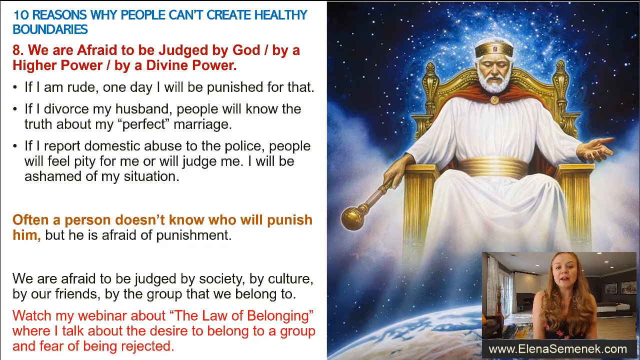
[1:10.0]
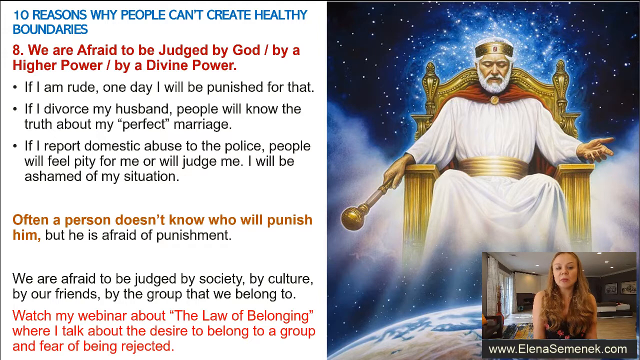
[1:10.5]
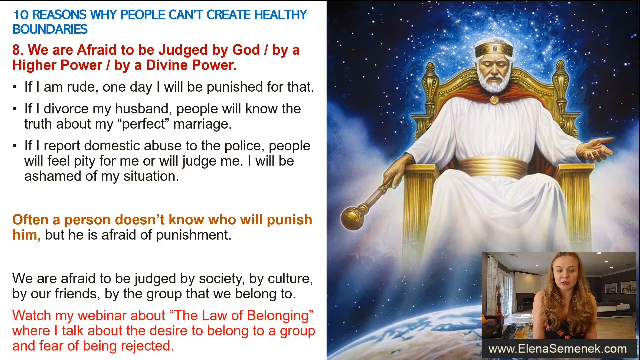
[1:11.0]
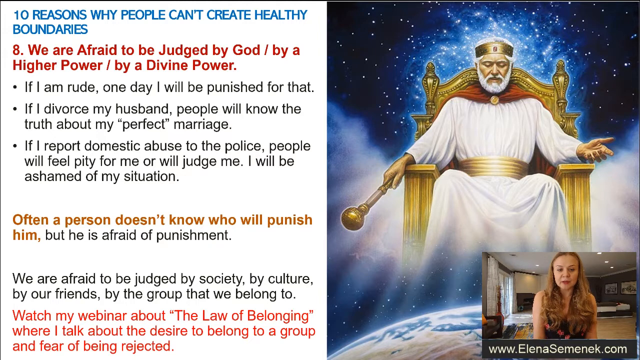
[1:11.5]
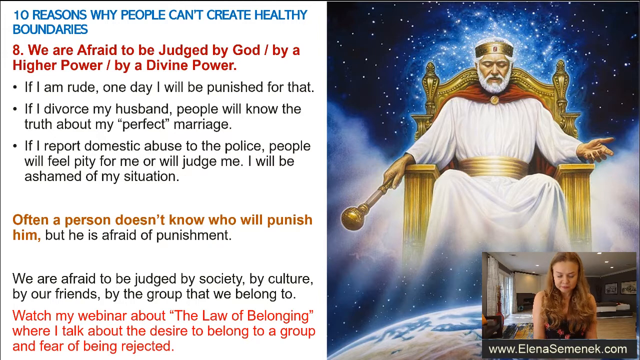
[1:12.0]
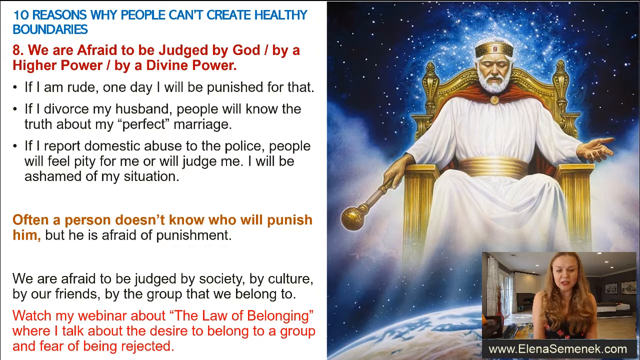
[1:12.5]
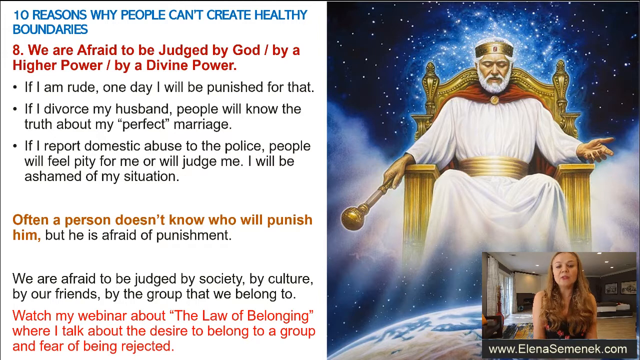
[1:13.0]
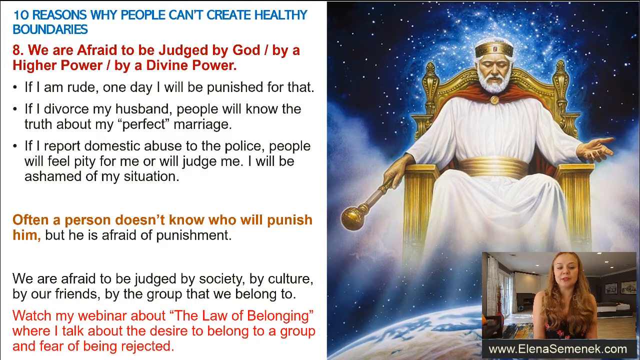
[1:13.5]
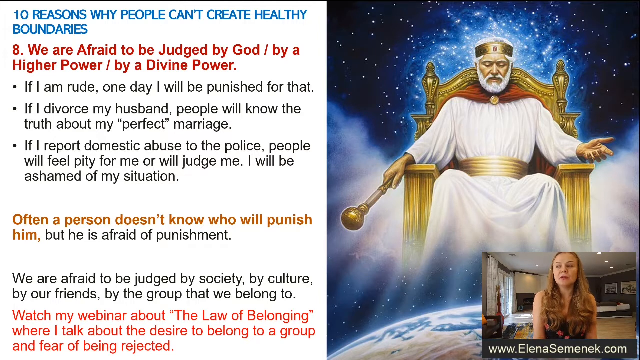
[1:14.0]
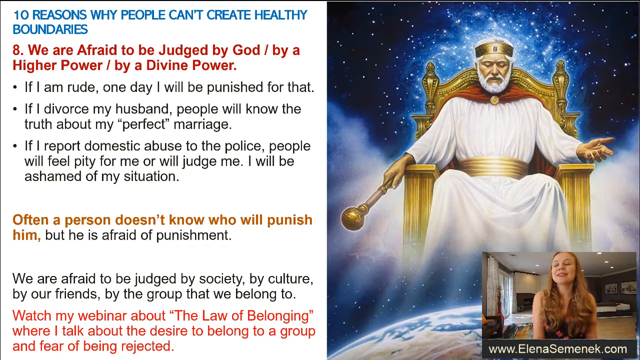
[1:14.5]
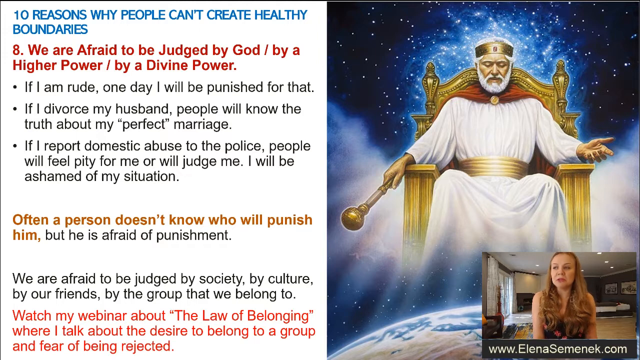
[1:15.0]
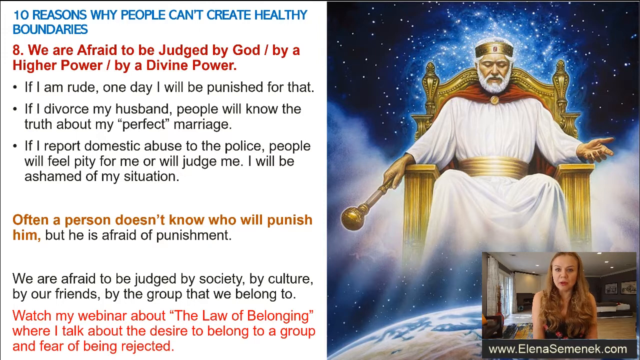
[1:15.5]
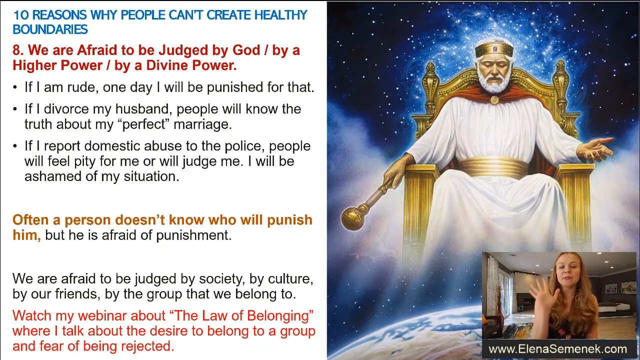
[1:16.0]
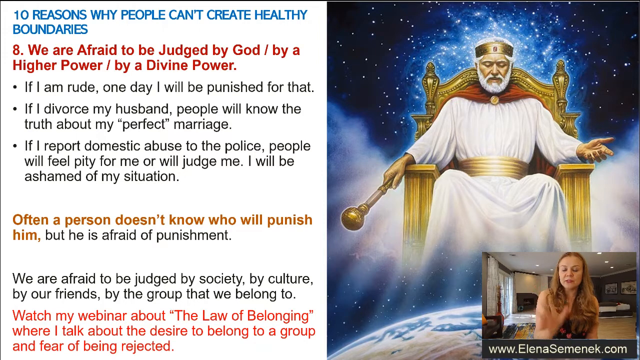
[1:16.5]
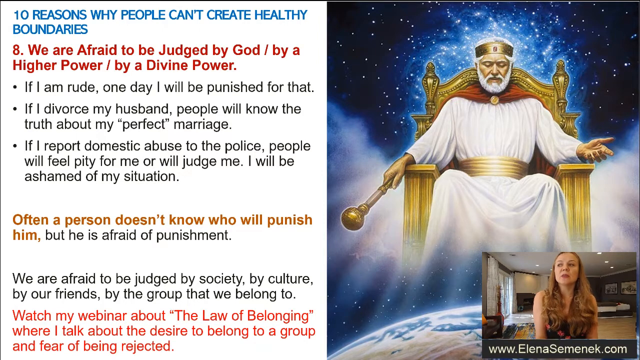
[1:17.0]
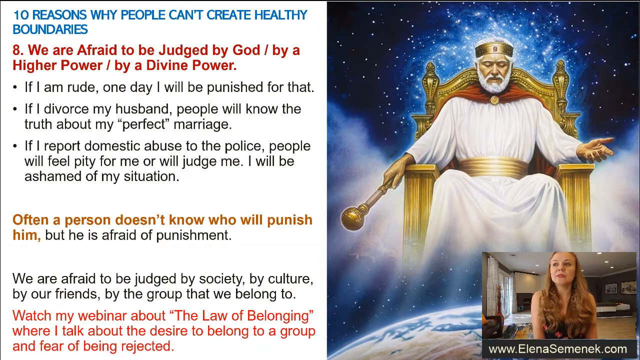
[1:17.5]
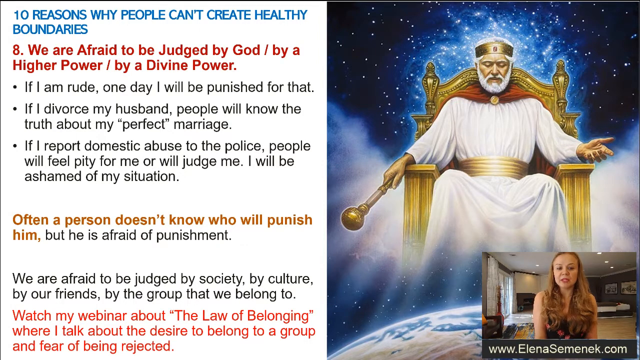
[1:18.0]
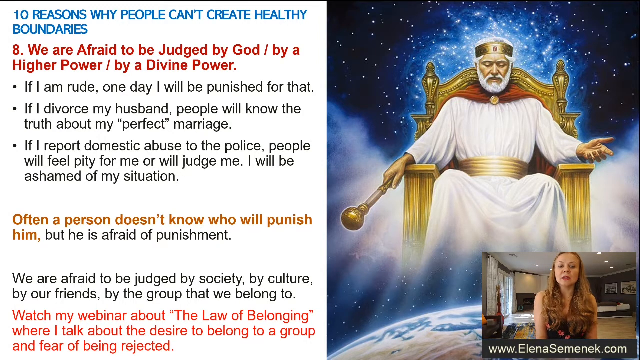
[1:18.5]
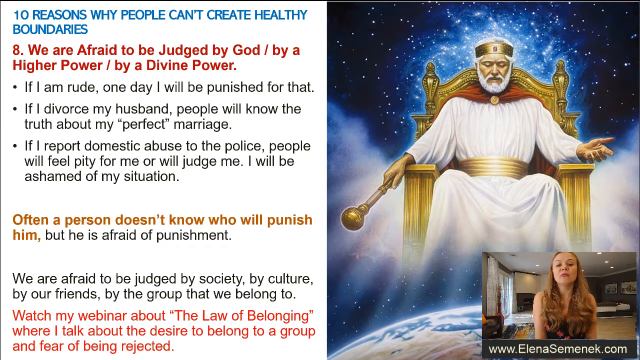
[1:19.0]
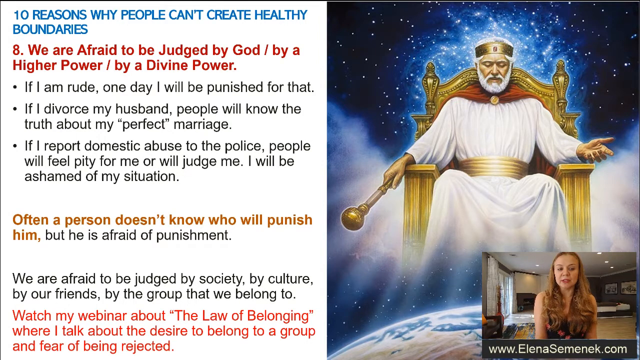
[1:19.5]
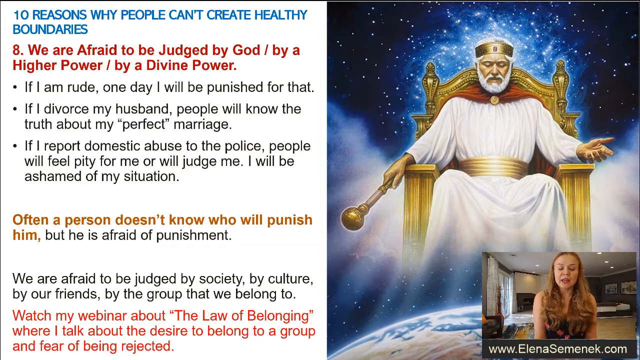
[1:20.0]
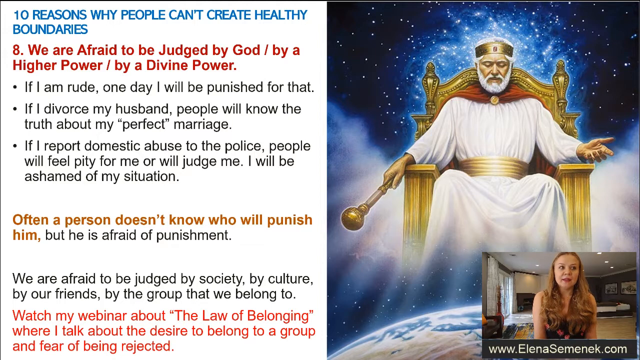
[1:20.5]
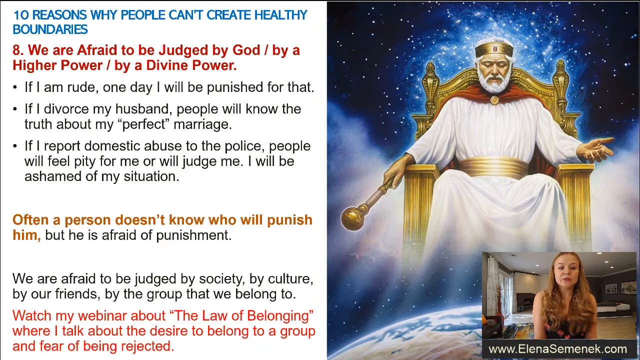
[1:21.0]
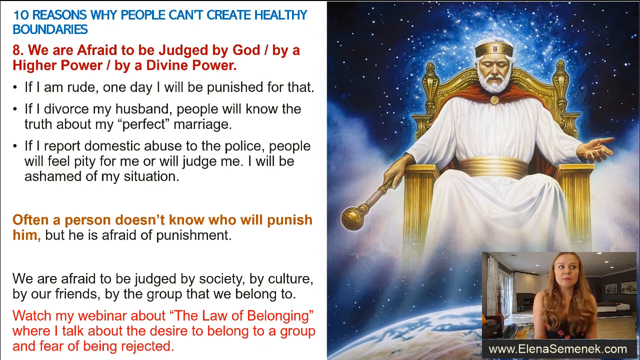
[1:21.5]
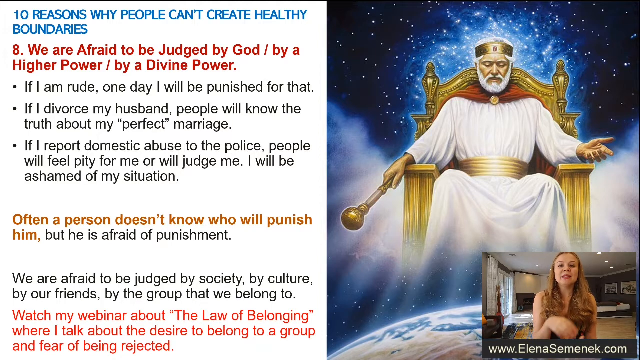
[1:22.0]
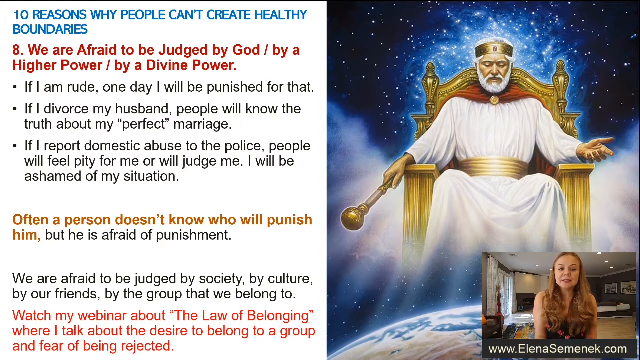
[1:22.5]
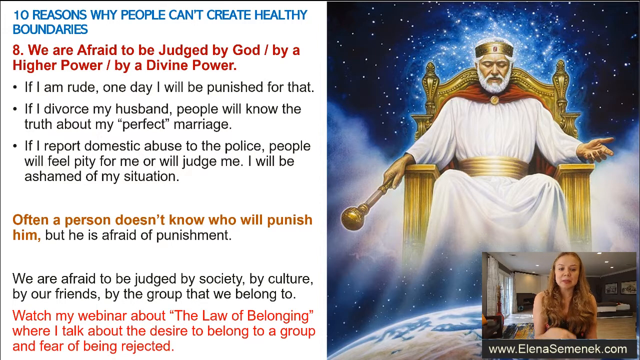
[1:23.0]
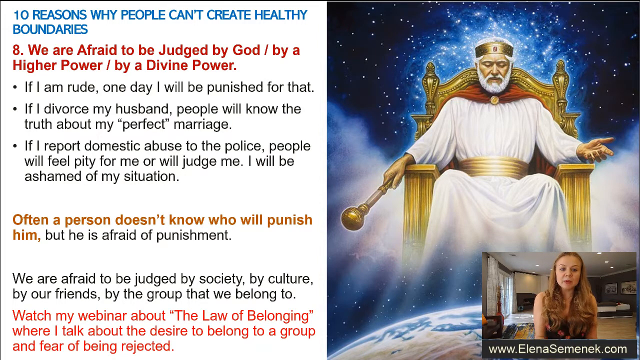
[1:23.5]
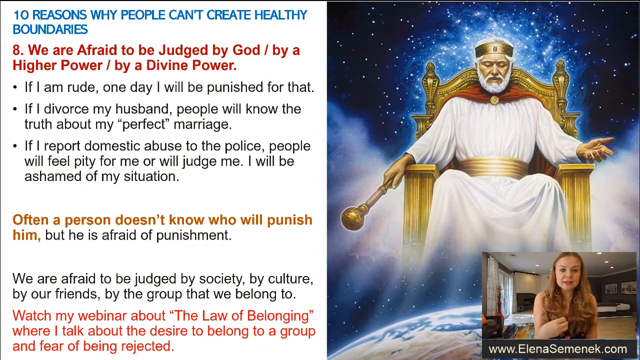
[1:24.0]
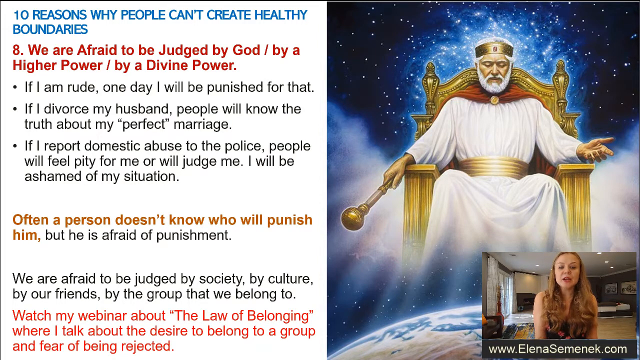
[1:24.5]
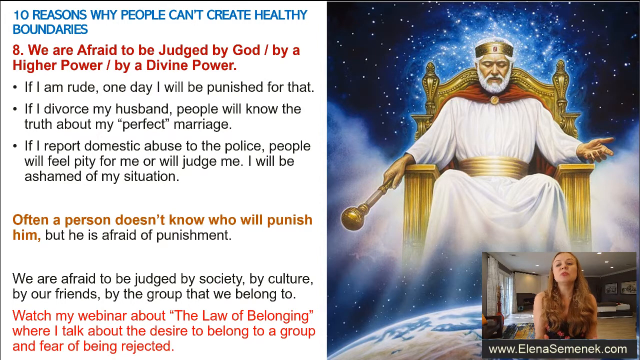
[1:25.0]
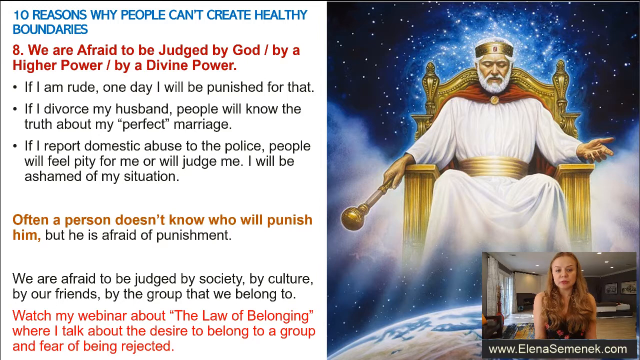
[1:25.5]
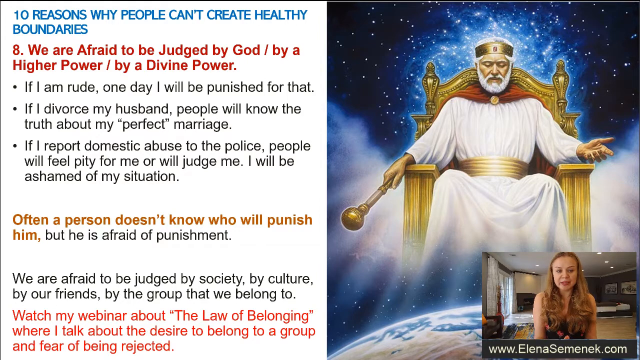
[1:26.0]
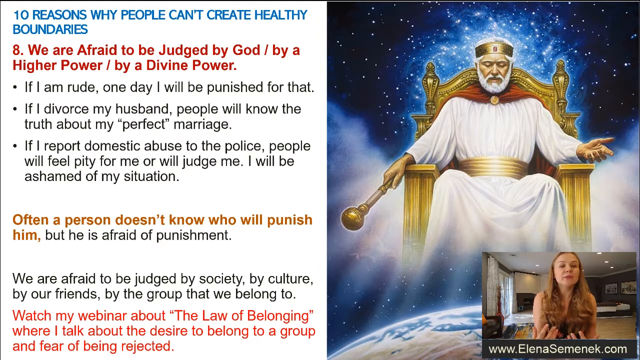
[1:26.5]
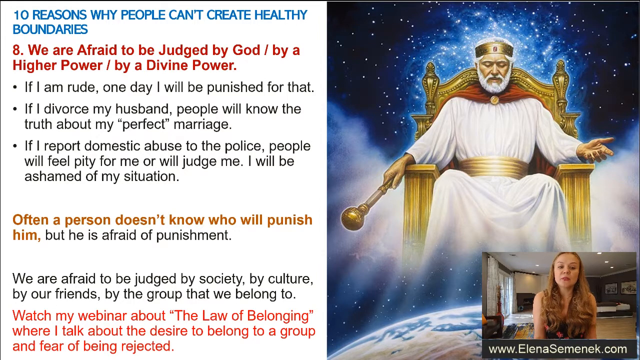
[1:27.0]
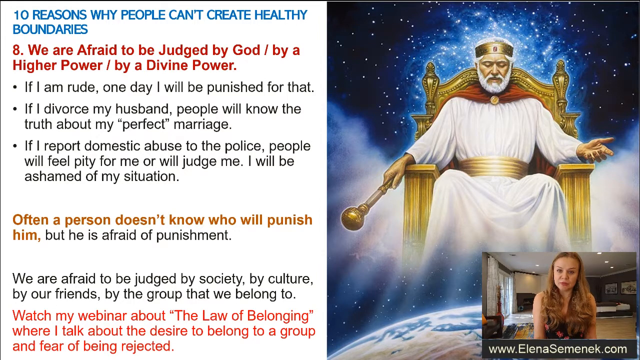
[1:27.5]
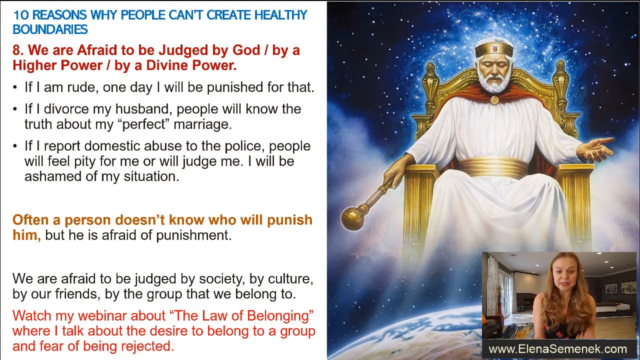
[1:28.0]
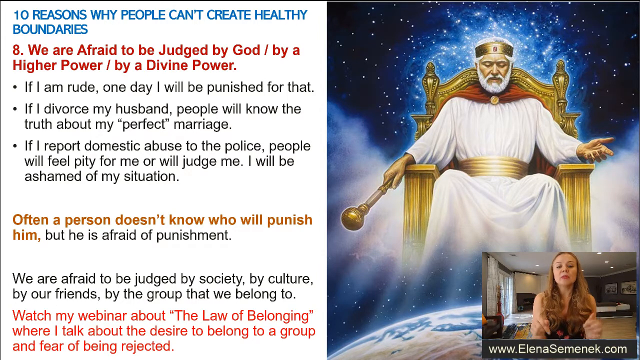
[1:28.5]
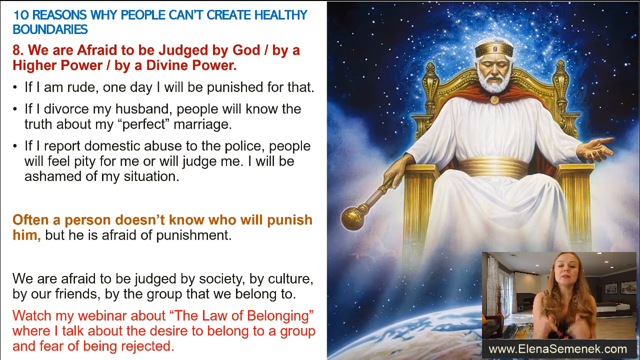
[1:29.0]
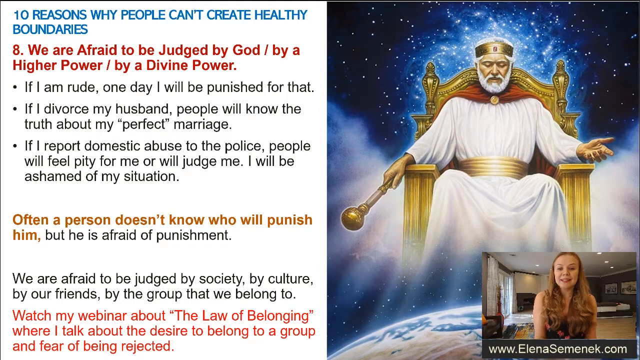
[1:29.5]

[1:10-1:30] In the bottom right-hand corner of the screen is a smaller video screen in which a woman with long blonde hair speaks directly to the camera. She wears a black tank top with red and orange spots. Along the bottom of that video it says "www.elanaseminic.com". On the right half of the screen is a large digital image of a golden throne, with a man in a white robe sitting on it. He has a thick white beard and mustache with white hair, wears a gold crown, and holds a gold sphere in his right hand. Behind him is outer space, just darkness and stars. The left side of the screen is white, and starting at the very top it reads: "10 reasons why people can't create healthy boundaries. We are afraid to be judged by God, by a higher power, by divine power. If I am rude one day I will be punished for that. If I divorce my husband people will know the truth about my perfect marriage. If I report domestic abuse to the police people will feel pity for me or will judge me. I will be ashamed of my situation." Written in red, it says "watch my webinar about the law of belonging where I talk about the desire to belong to a group".